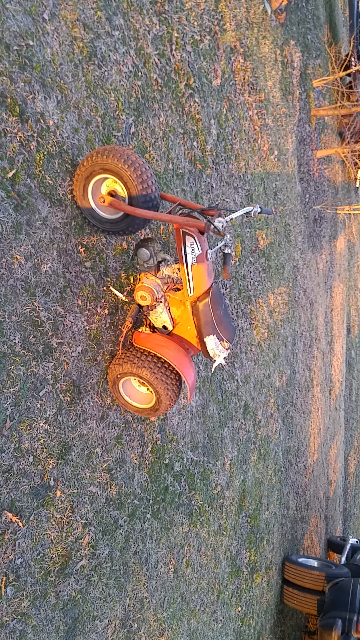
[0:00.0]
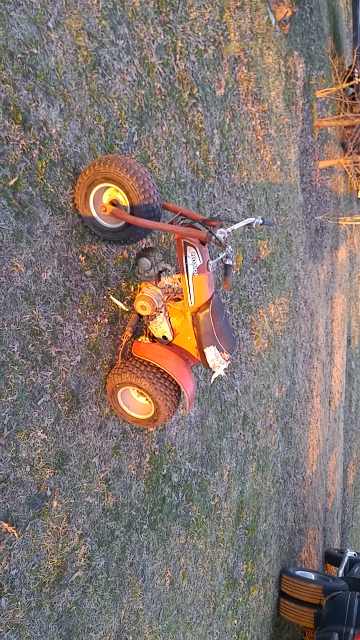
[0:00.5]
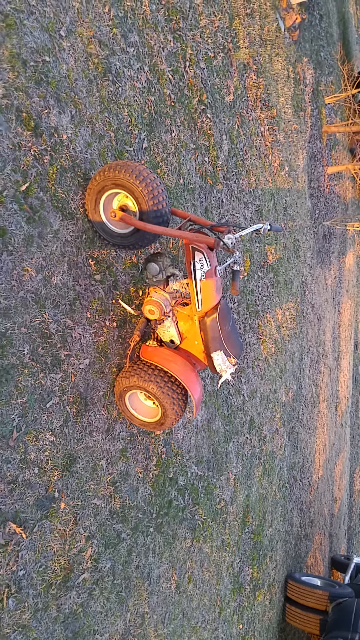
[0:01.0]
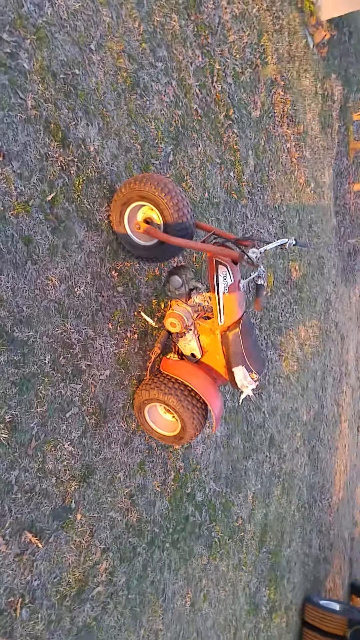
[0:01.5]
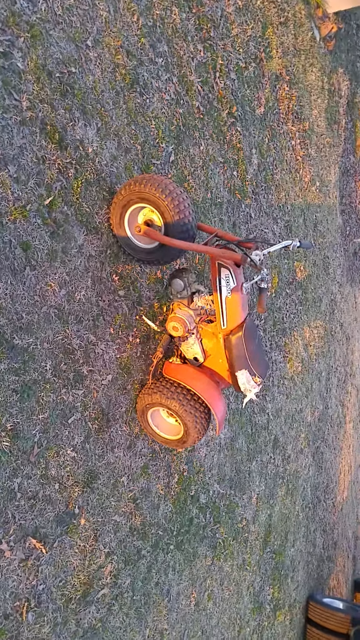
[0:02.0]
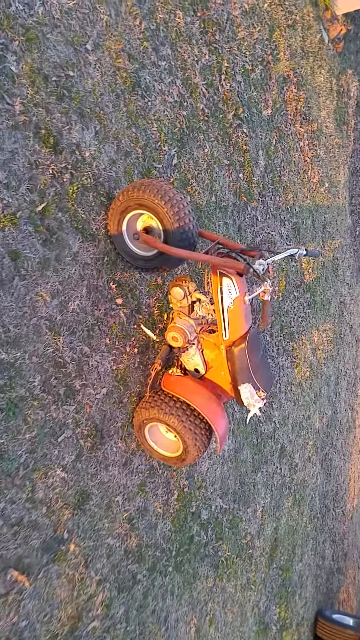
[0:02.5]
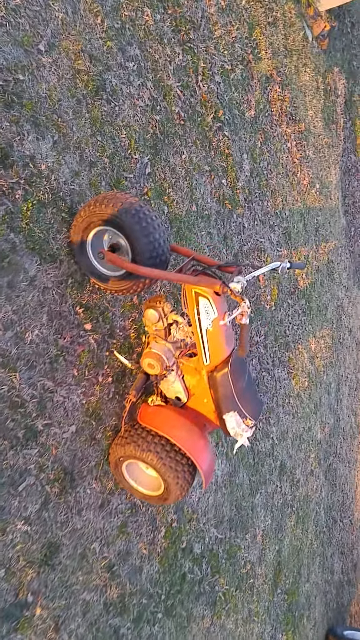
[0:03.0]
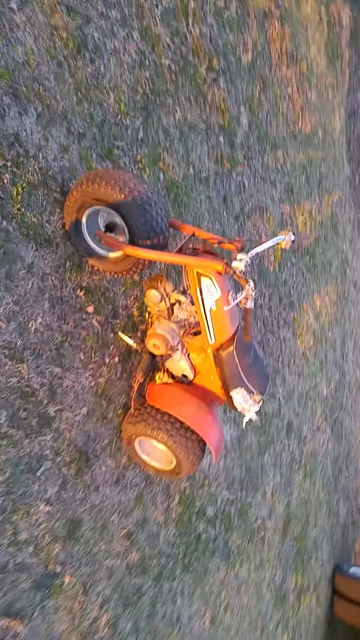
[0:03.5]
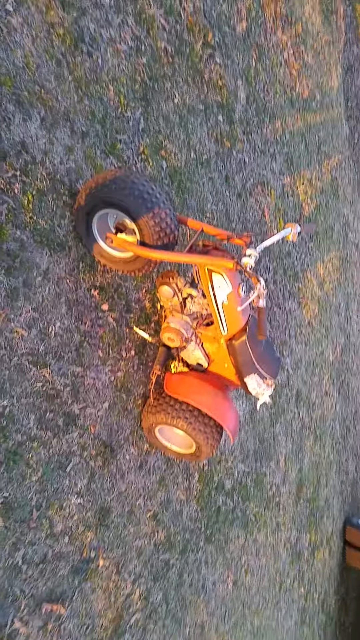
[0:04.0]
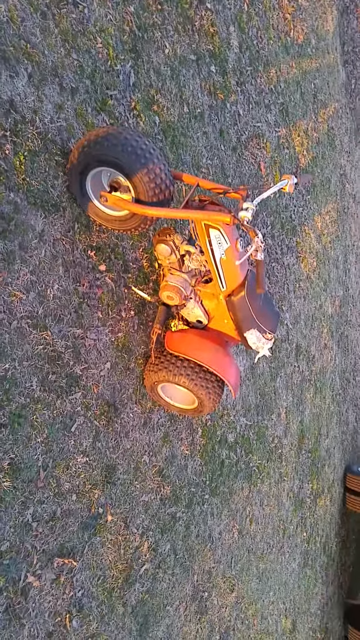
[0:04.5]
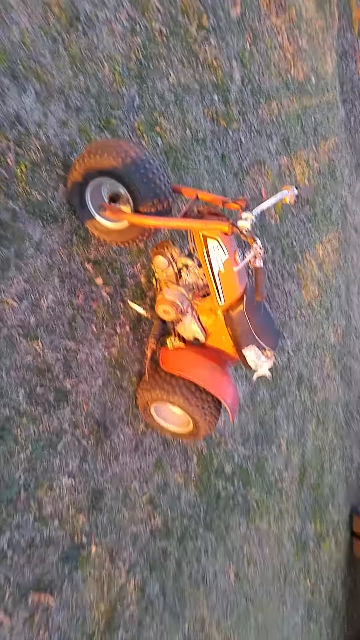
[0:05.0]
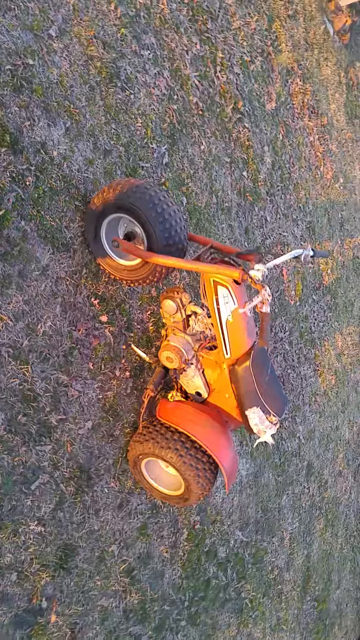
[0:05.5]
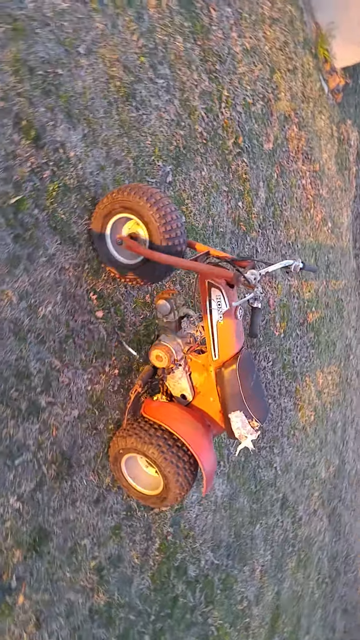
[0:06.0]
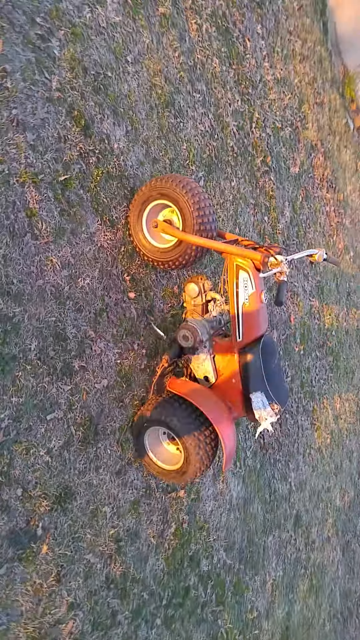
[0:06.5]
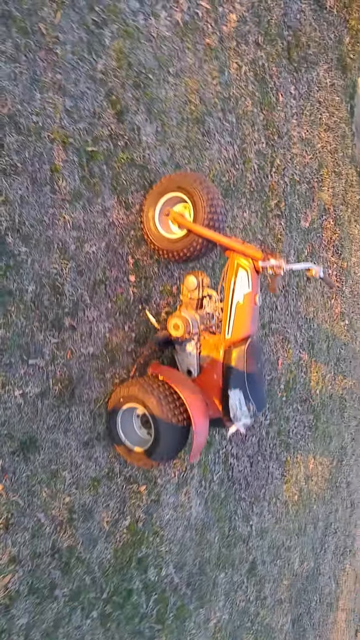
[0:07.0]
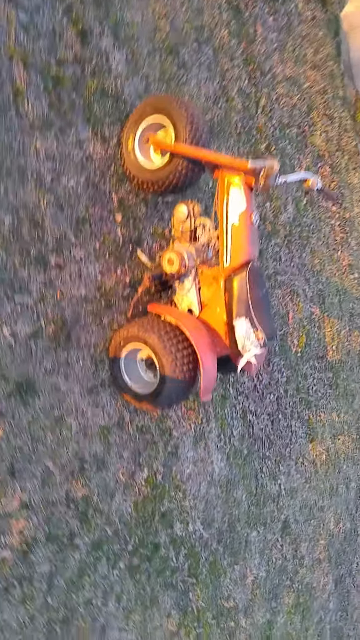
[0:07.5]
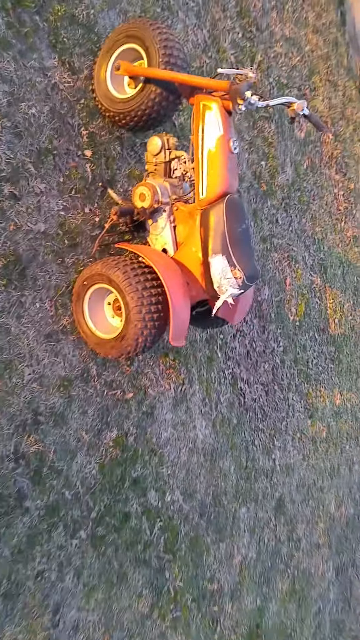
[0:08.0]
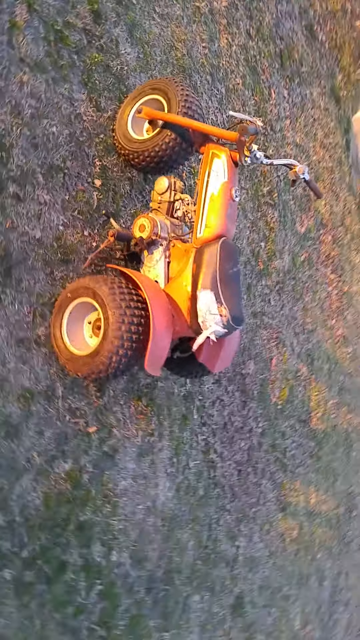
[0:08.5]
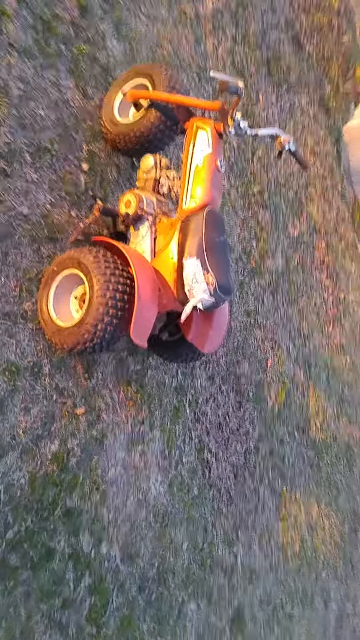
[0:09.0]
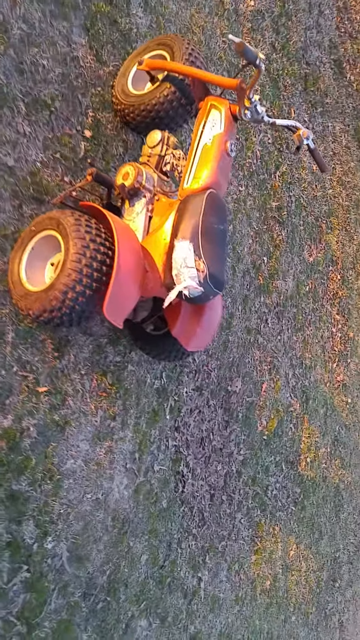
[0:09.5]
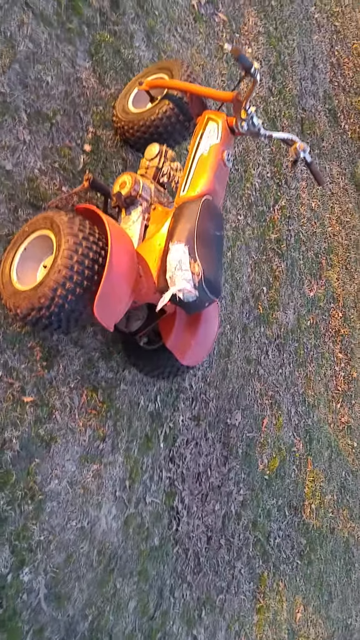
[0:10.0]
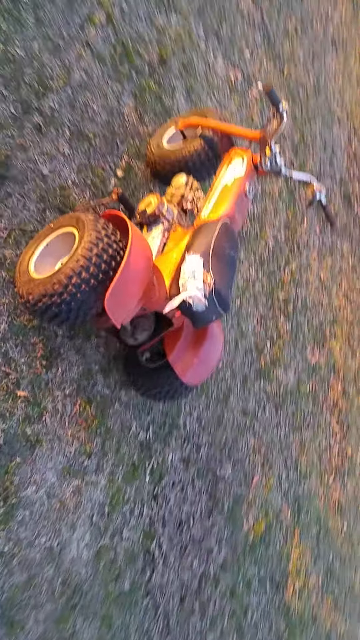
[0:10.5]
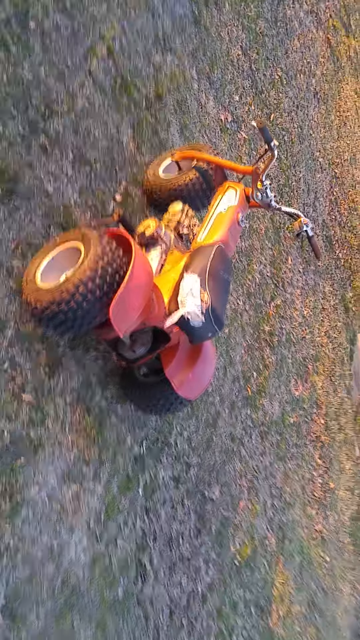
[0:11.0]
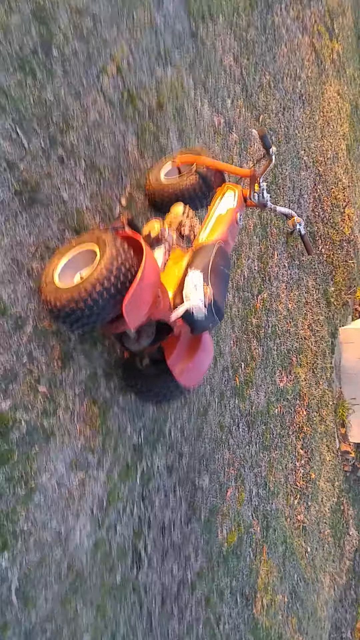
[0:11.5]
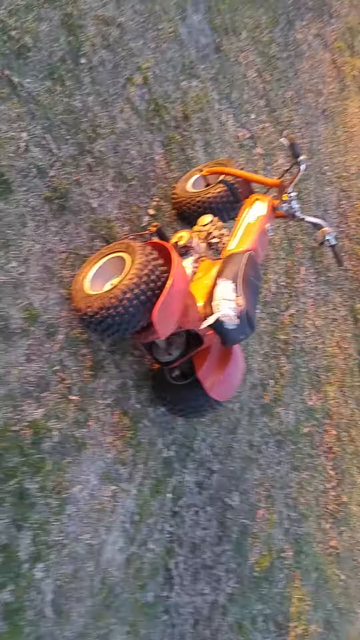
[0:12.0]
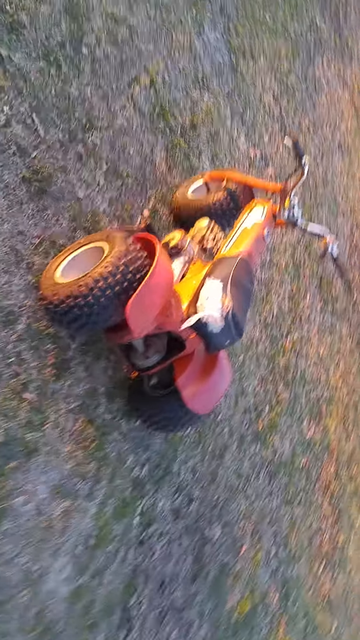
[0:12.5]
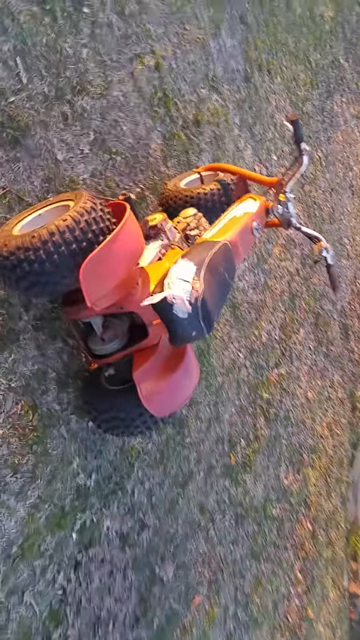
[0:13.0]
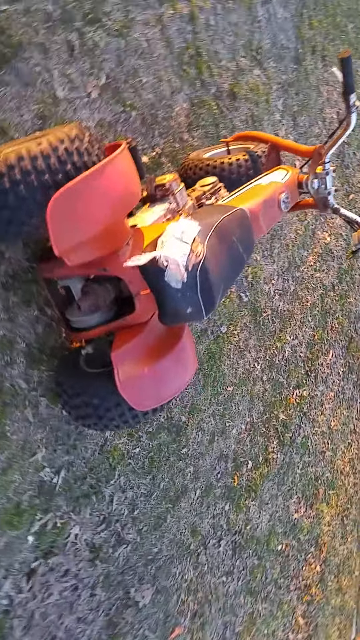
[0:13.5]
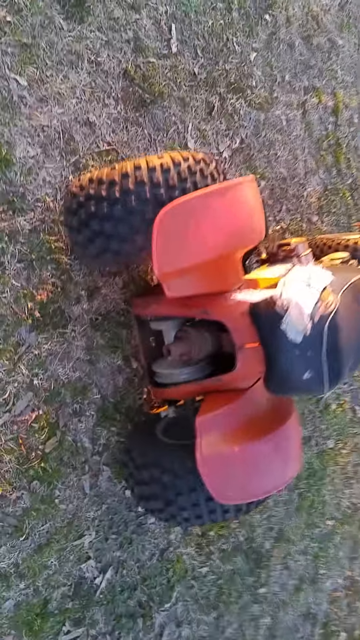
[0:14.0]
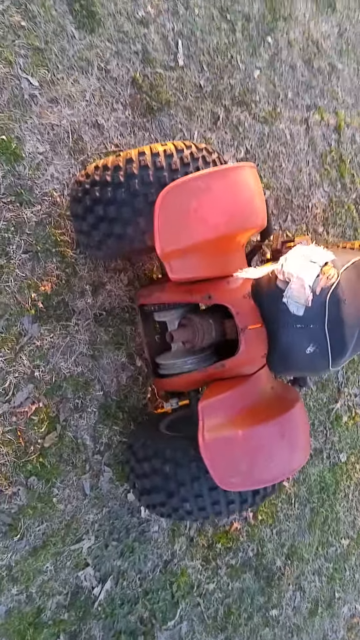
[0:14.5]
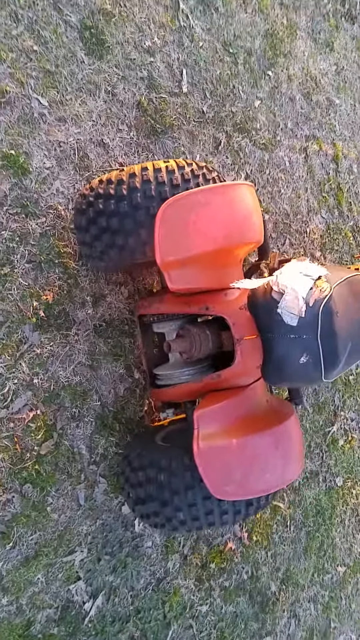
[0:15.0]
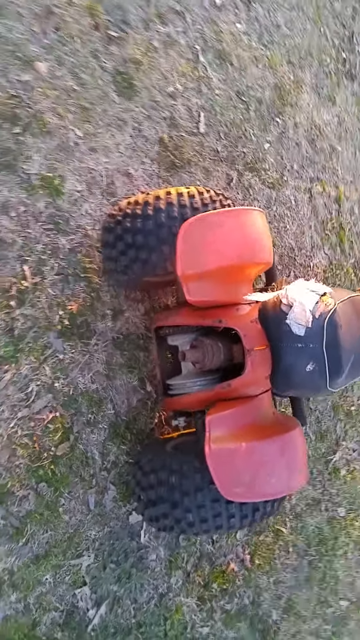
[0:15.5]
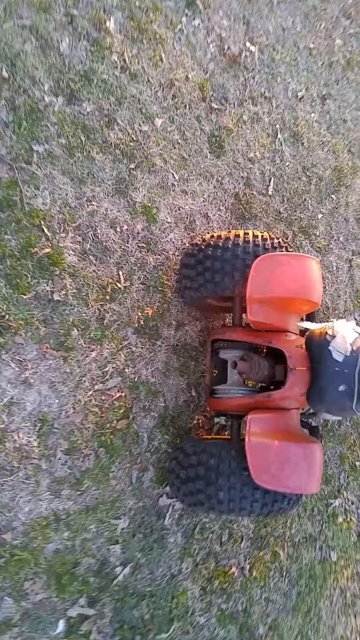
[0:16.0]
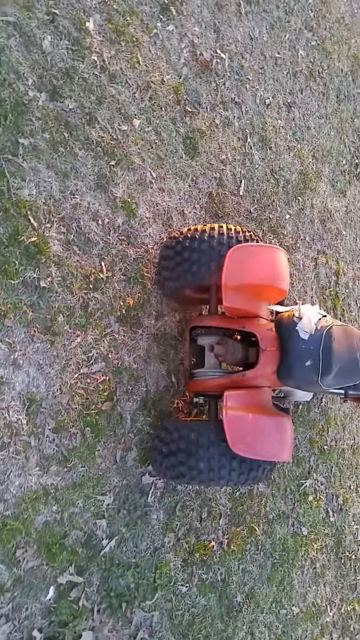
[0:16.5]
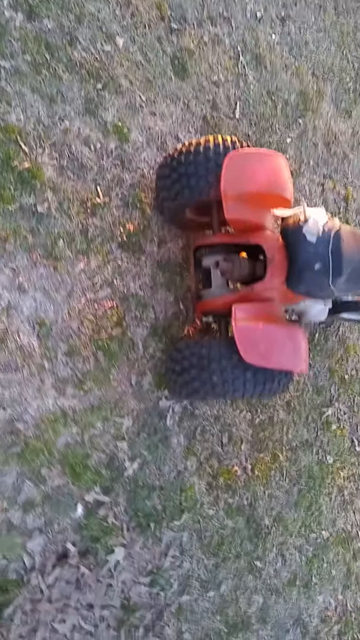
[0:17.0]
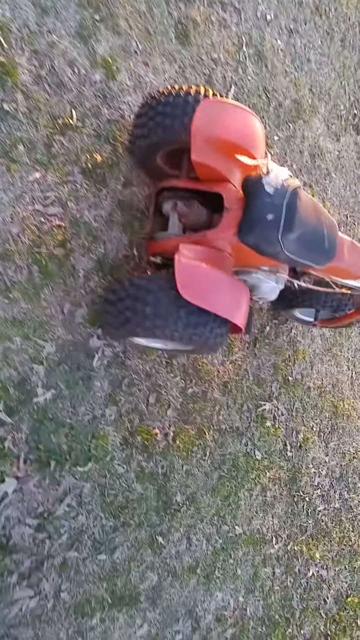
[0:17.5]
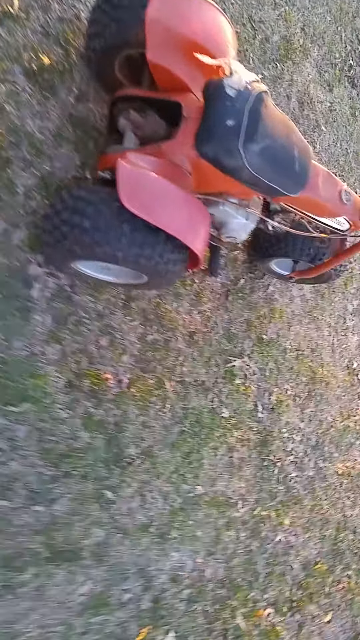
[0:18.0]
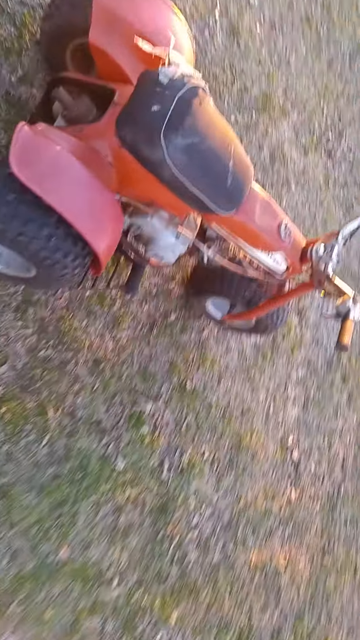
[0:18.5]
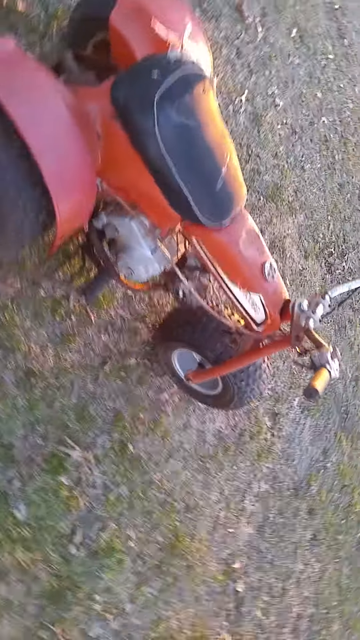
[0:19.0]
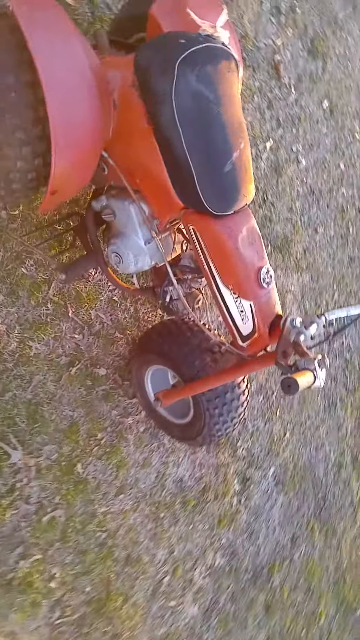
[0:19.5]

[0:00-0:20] A very small three-wheeler that almost looks like a child's tricycle is parked in the middle of a grassy area. It is burgundy and yellow and has three small black rubber tires. What appear to be mechanical components are visible toward the bottom of the vehicle. The grass is very sparse and does not look well-kept. The person filming walks around the three-wheeler; their shadow is visible on the three-wheeler and on the grass. They move around to the back side, where the mechanical components seem to be visible, and then around to the side, where the mechanical components appear to be visible again.